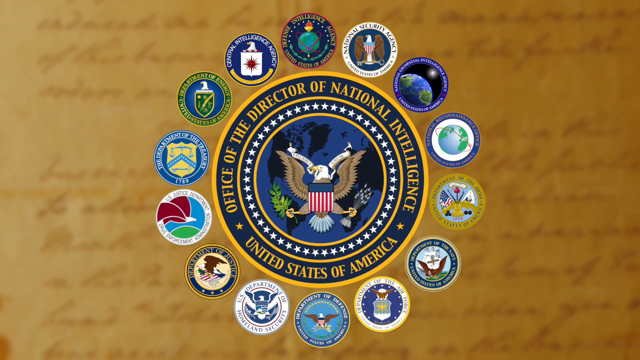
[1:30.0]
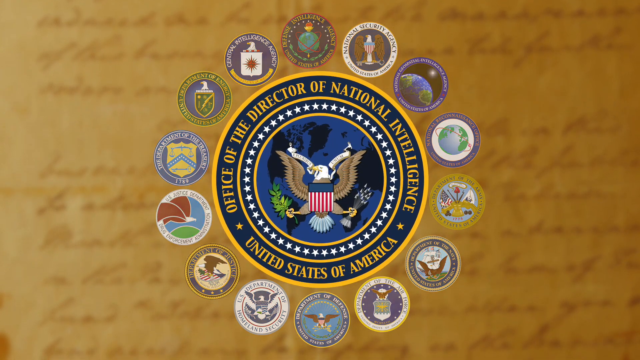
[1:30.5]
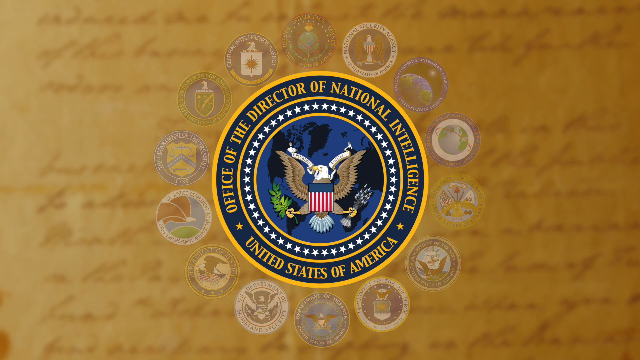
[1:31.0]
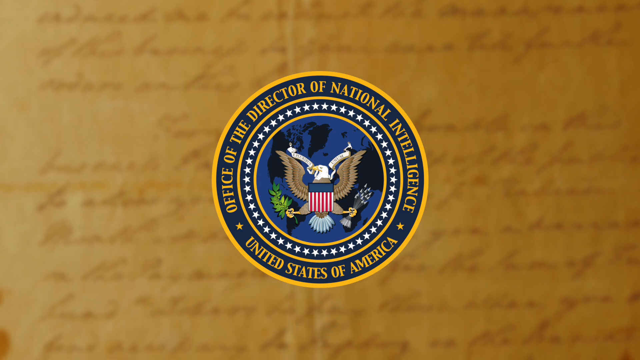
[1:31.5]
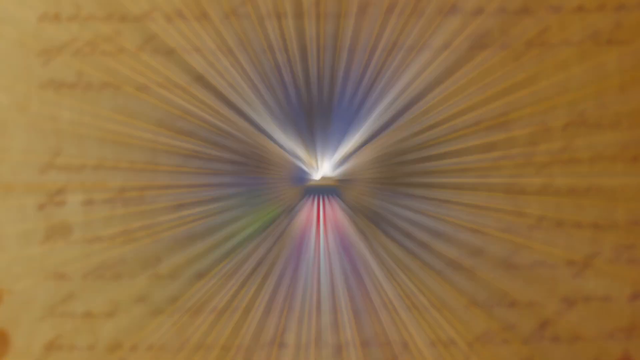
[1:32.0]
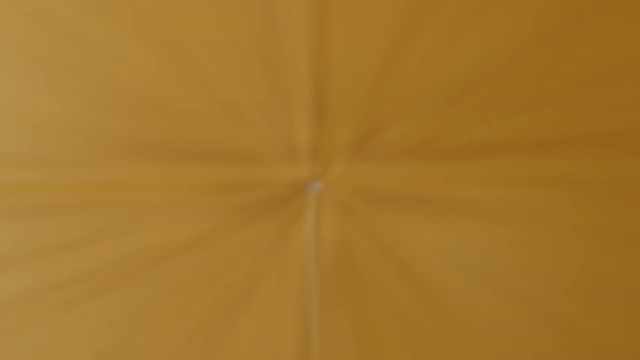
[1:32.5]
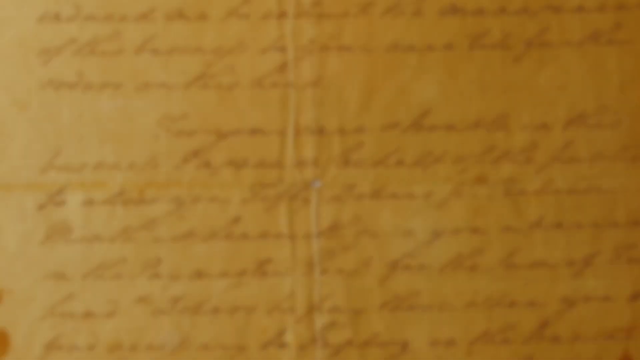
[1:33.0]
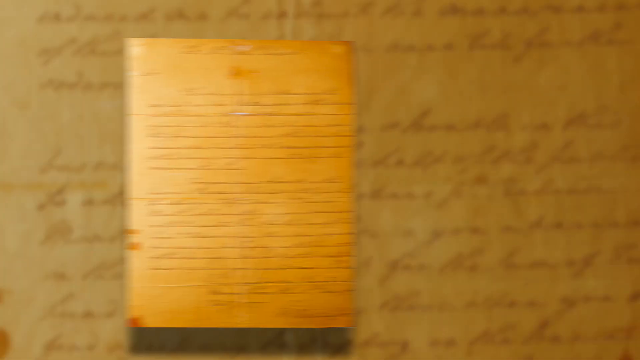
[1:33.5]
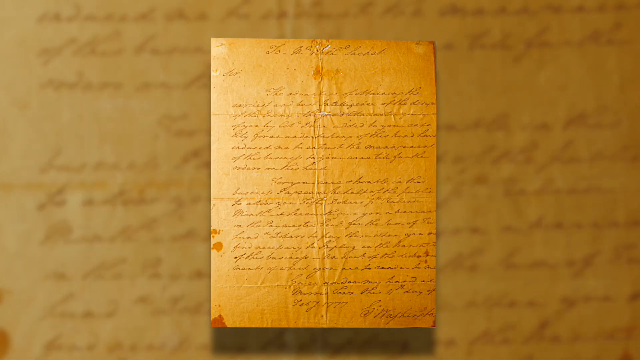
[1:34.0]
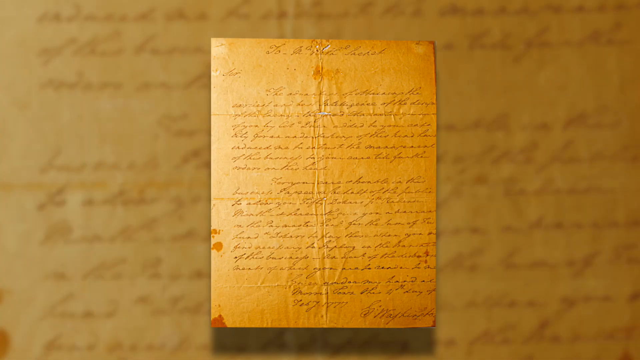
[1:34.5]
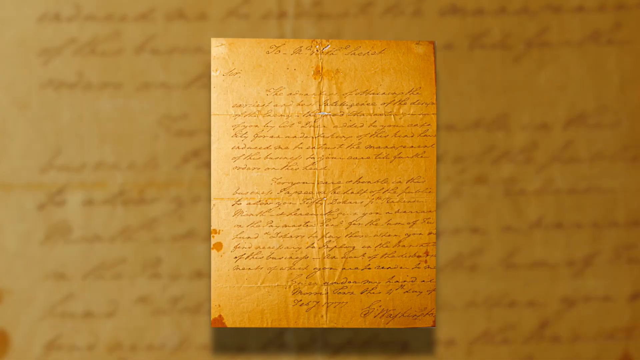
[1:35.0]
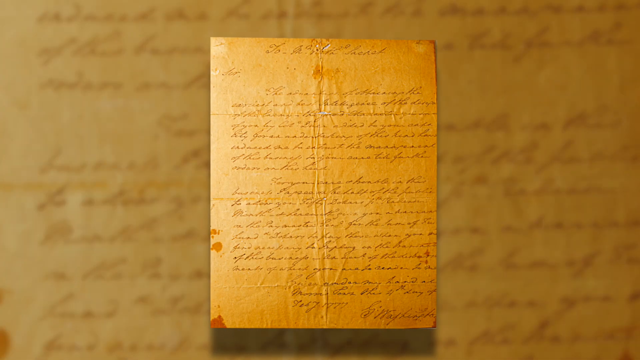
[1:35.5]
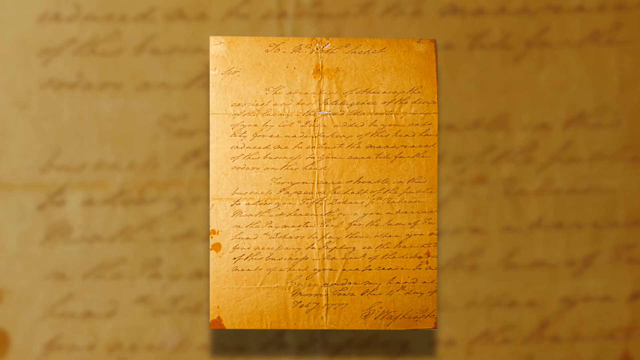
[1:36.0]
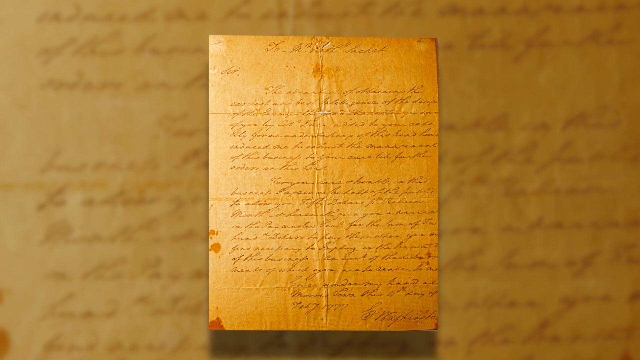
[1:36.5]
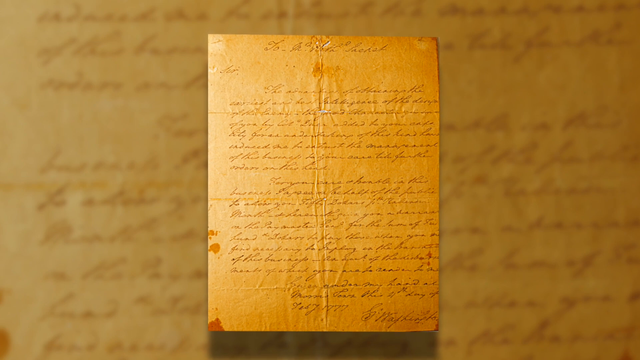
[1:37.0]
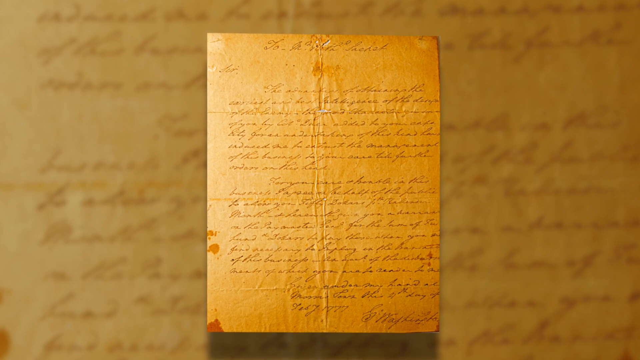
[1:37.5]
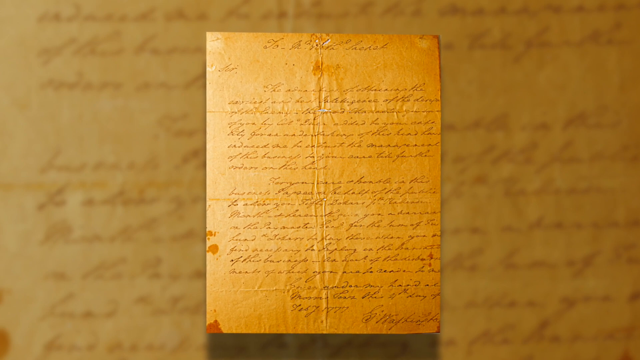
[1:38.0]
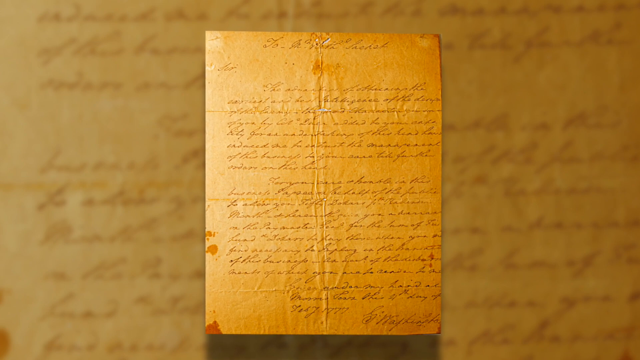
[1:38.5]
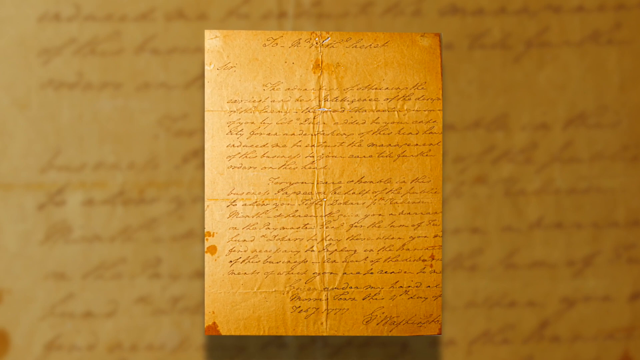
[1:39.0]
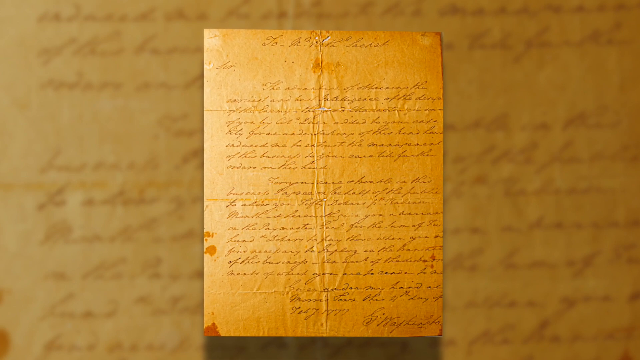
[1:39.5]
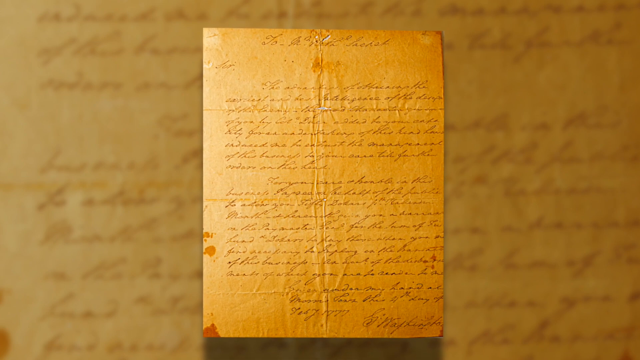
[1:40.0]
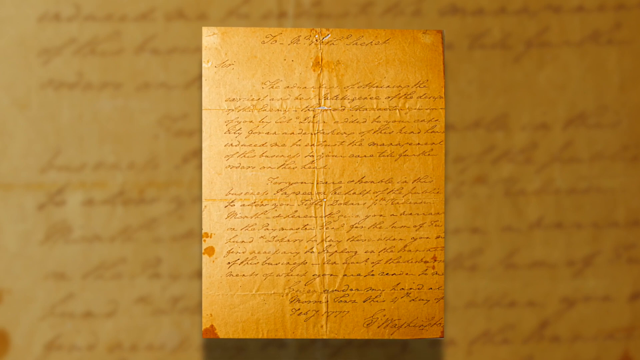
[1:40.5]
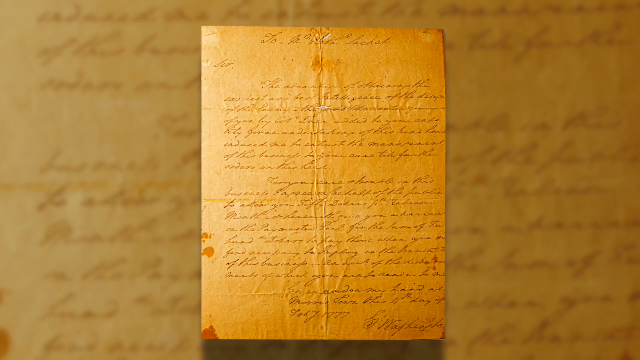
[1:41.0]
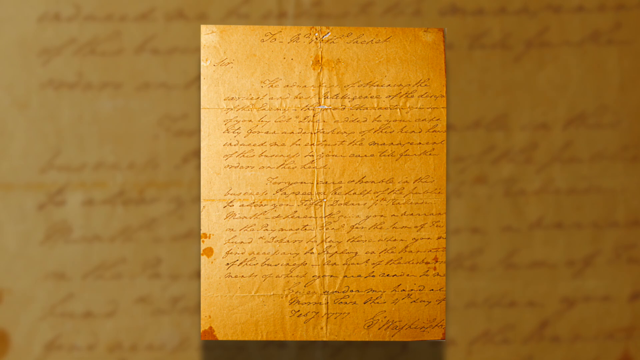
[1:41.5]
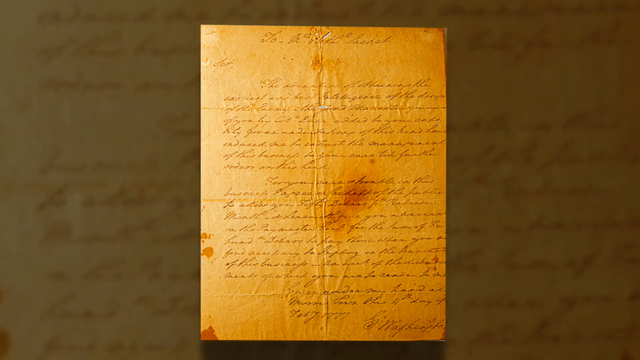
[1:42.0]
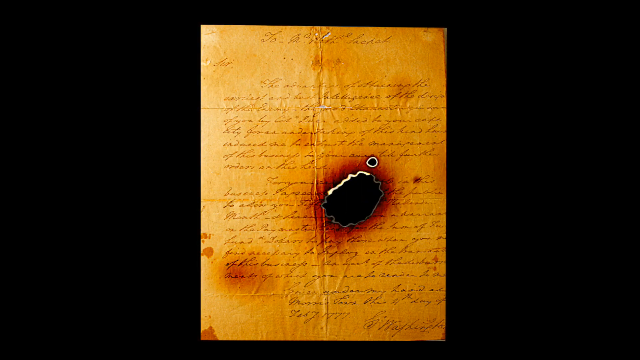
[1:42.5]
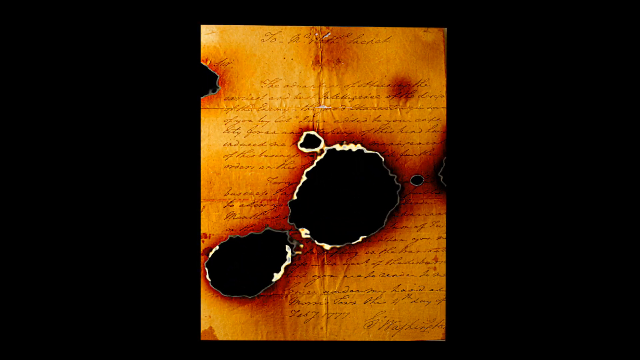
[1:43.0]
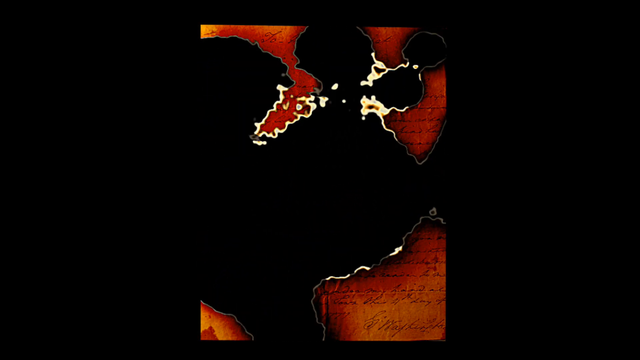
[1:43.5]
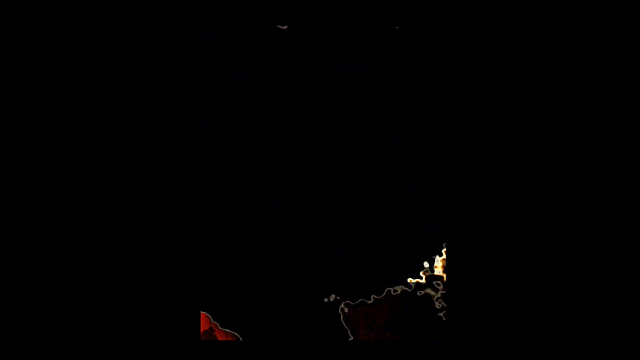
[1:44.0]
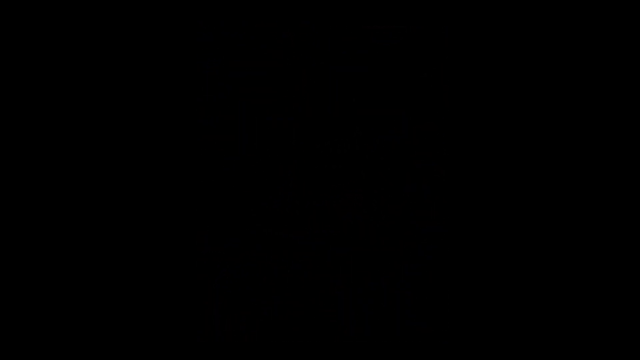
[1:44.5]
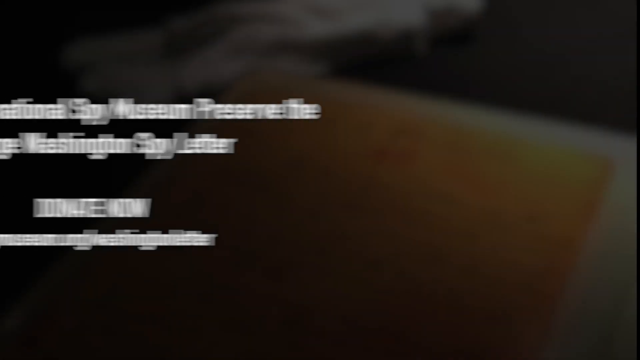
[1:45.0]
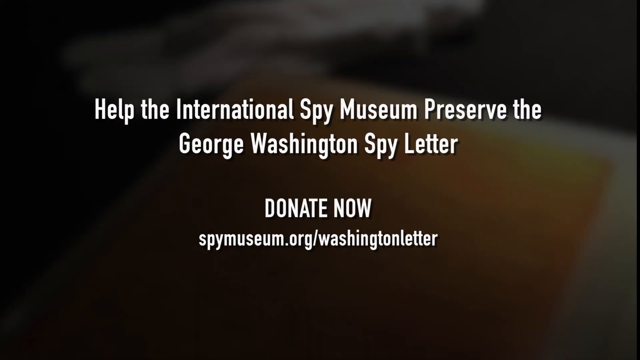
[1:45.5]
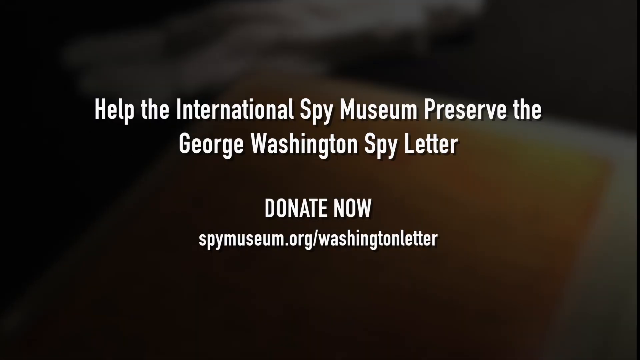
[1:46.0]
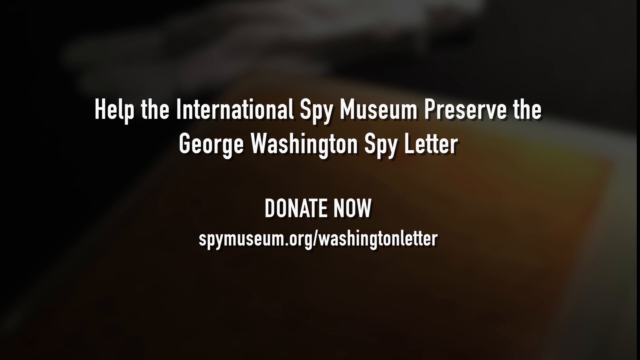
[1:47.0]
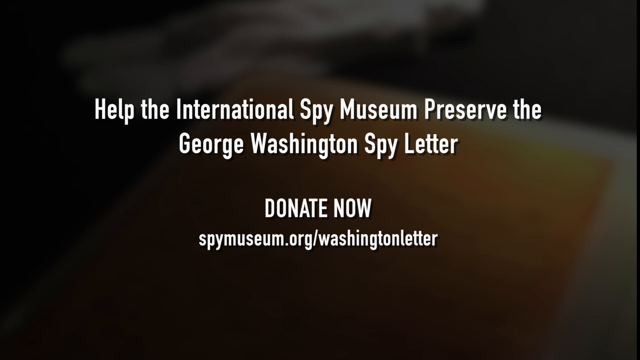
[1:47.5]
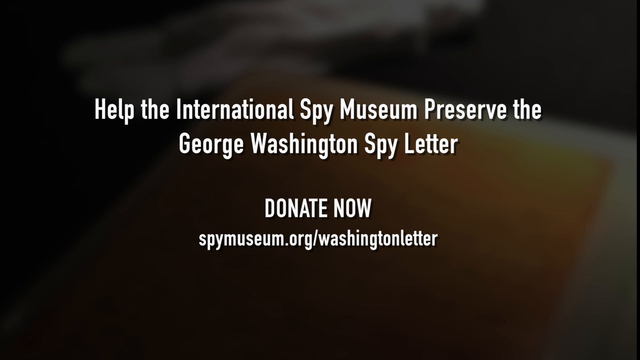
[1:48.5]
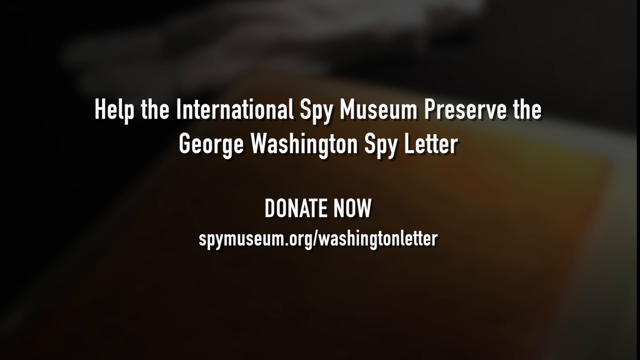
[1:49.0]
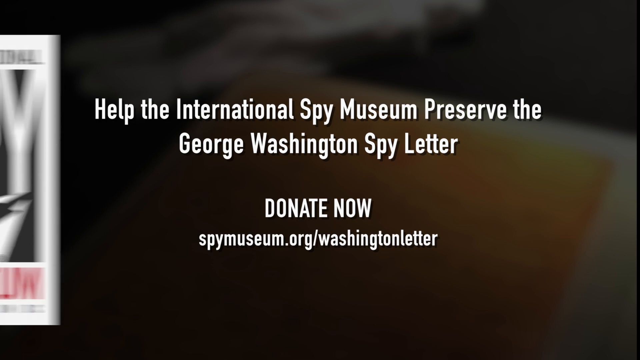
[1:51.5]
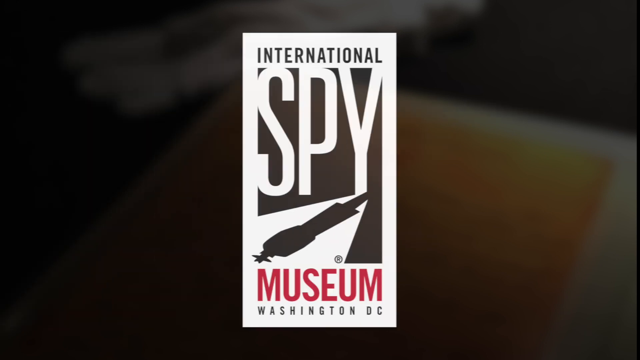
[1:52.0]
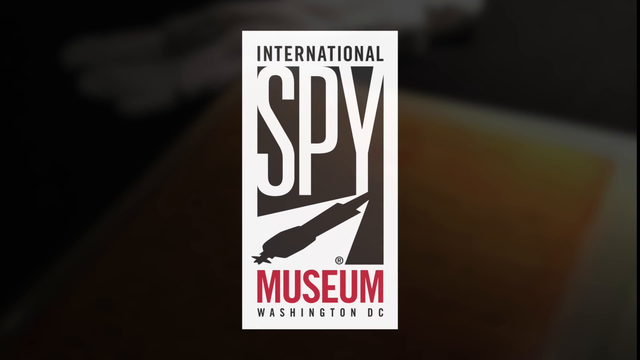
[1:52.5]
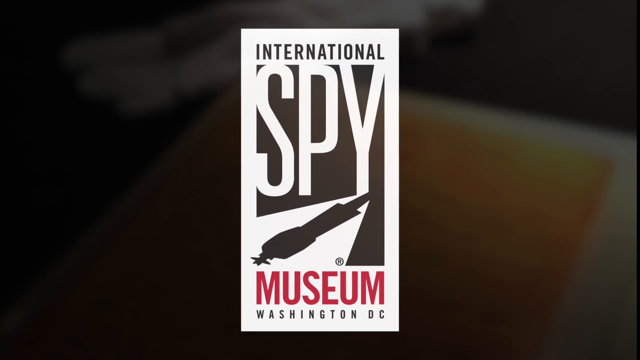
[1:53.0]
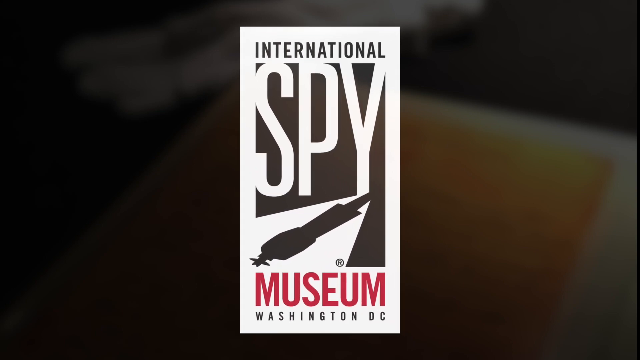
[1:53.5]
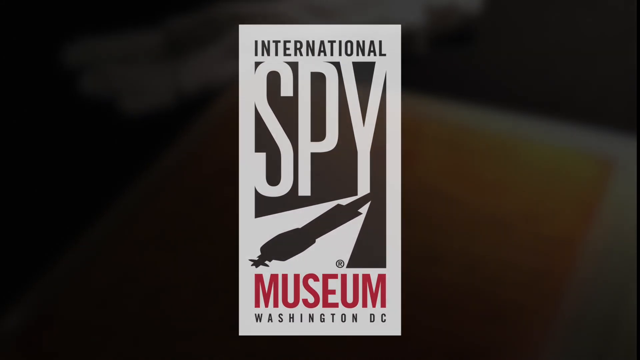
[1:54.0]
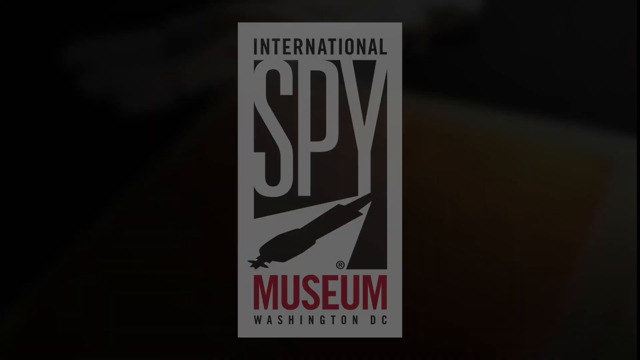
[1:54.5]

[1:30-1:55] A still image shows the seal of the Office of the Director of National Intelligence, surrounded by multiple other government agency seals. The surrounding seals slowly disappear, and then the seal for the National Intelligence of the United States of America quickly transitions into a sort of particle effect until it disappears off the screen. The video then zooms in on a handwritten letter on parchment. There are multiple brown and red stains on the paper, which has browned and yellowed with age. An effect makes the letter look like it is slowly burning until the screen transitions to fully black. Lines of white text then swipe in from the left, reading "Help the International Spy Museum preserve the George Washington spy letter. Donate now! spymuseum.org/washington letter".